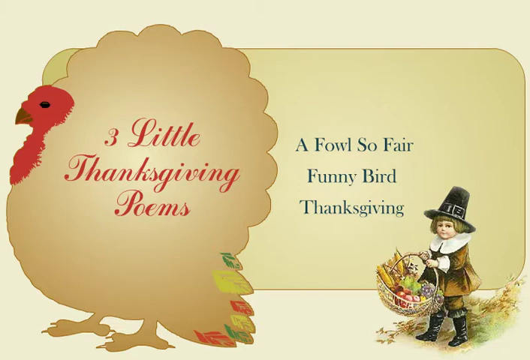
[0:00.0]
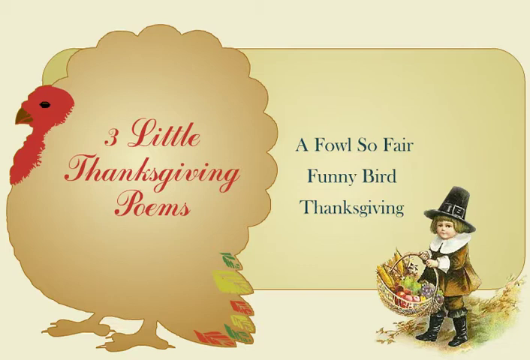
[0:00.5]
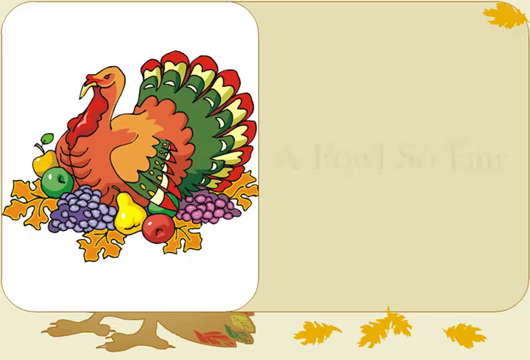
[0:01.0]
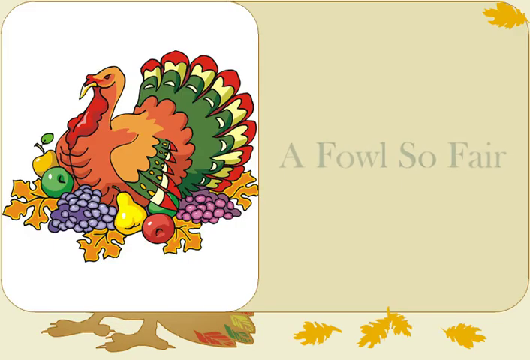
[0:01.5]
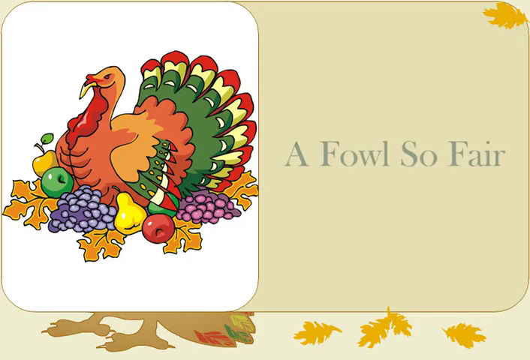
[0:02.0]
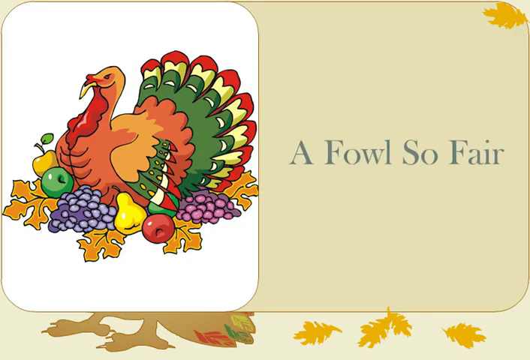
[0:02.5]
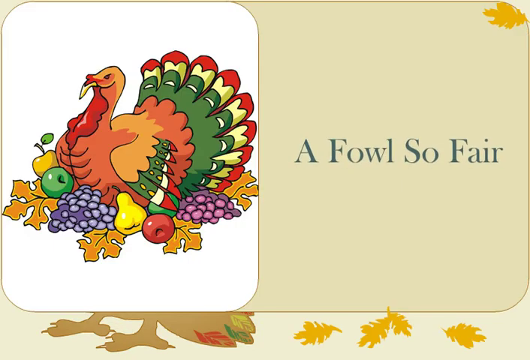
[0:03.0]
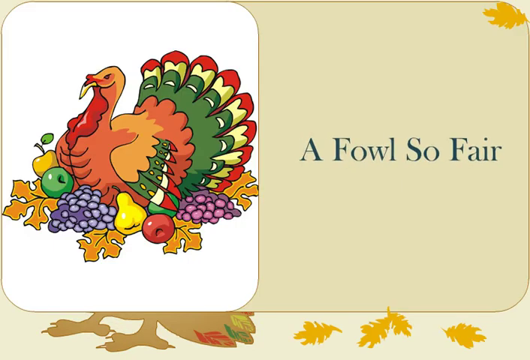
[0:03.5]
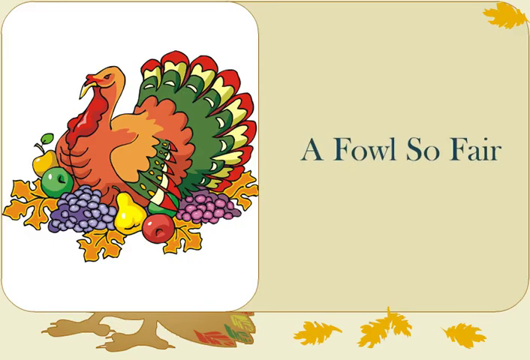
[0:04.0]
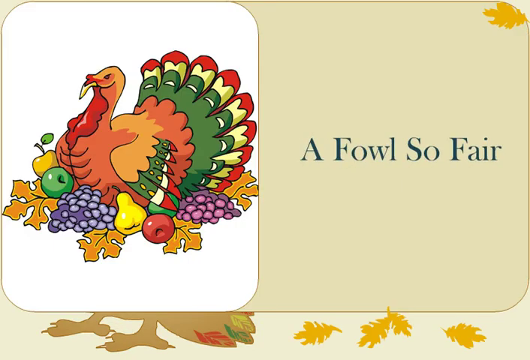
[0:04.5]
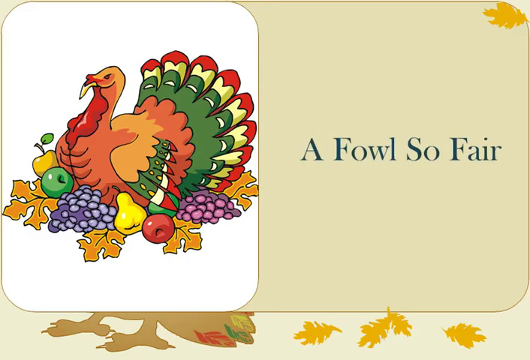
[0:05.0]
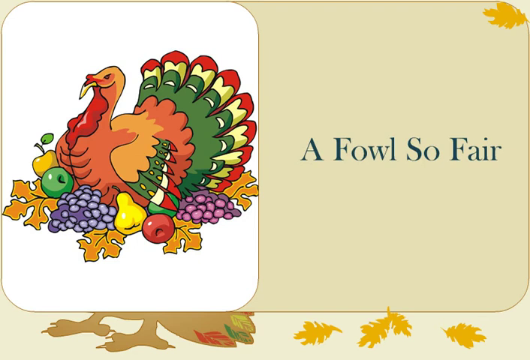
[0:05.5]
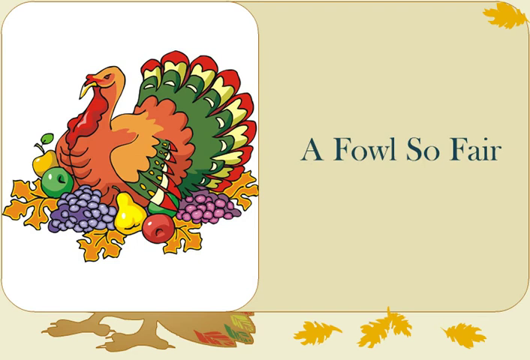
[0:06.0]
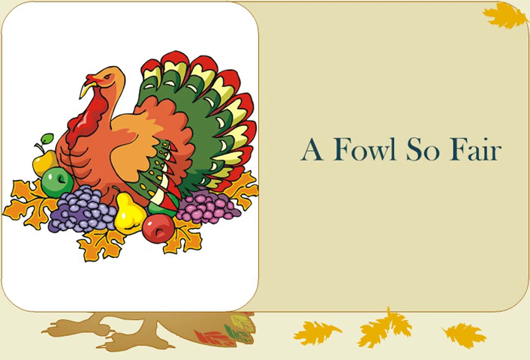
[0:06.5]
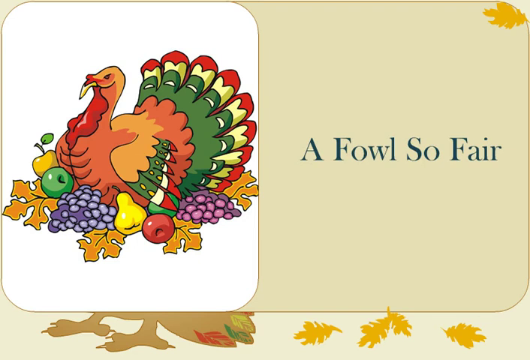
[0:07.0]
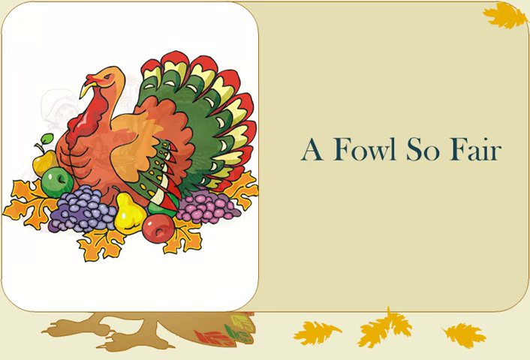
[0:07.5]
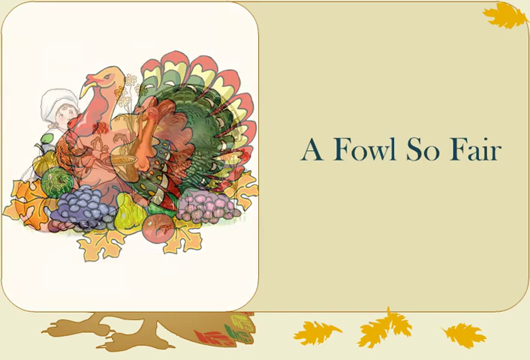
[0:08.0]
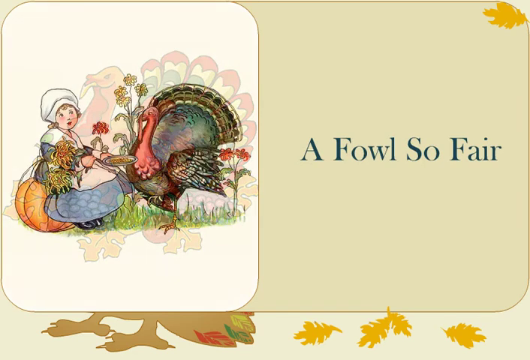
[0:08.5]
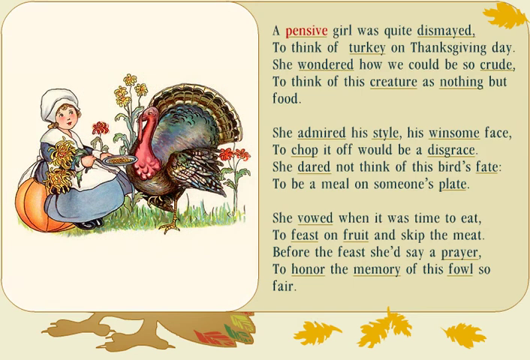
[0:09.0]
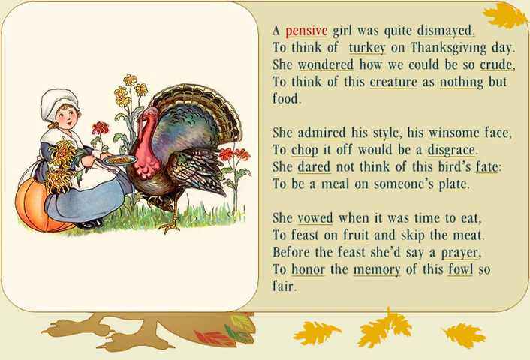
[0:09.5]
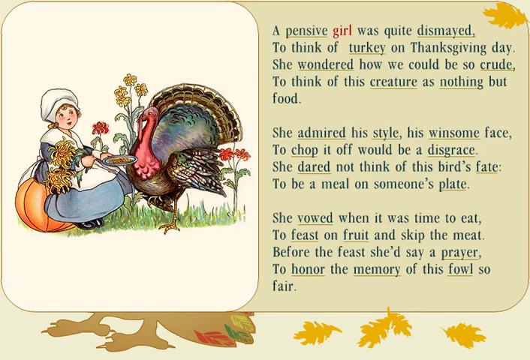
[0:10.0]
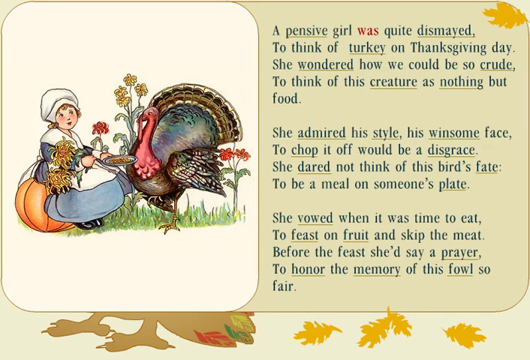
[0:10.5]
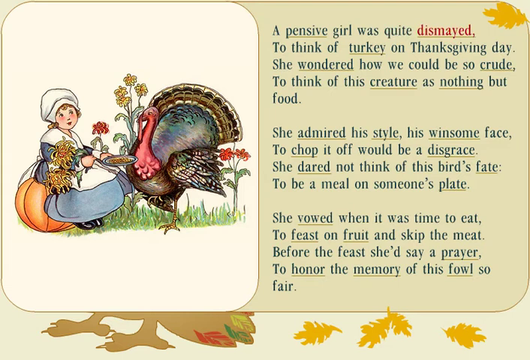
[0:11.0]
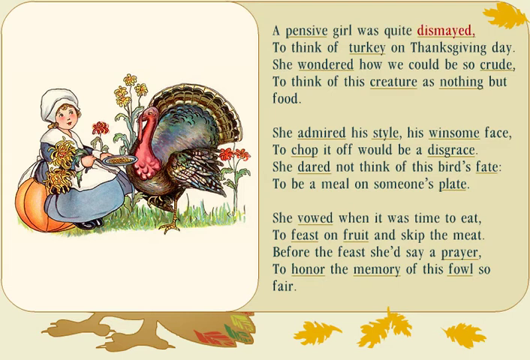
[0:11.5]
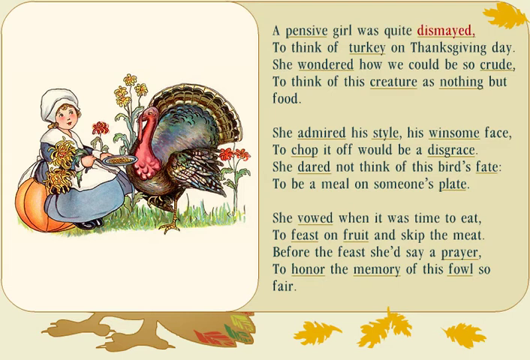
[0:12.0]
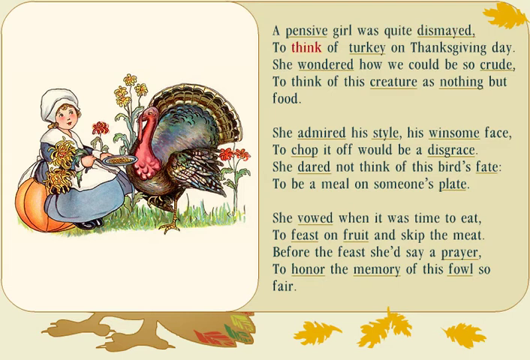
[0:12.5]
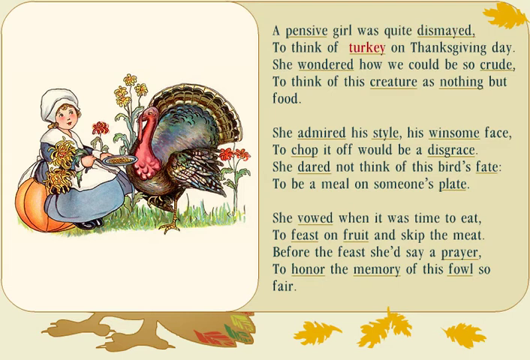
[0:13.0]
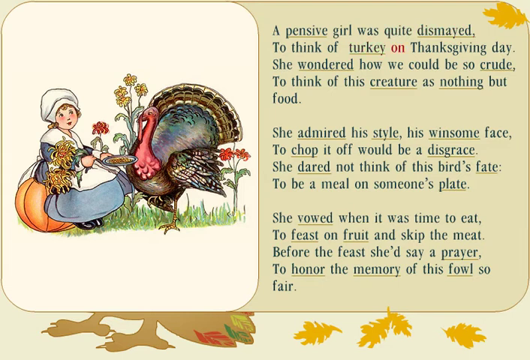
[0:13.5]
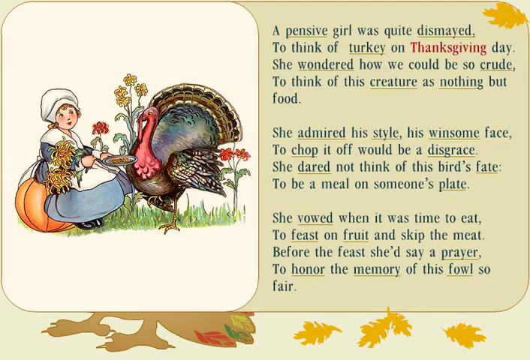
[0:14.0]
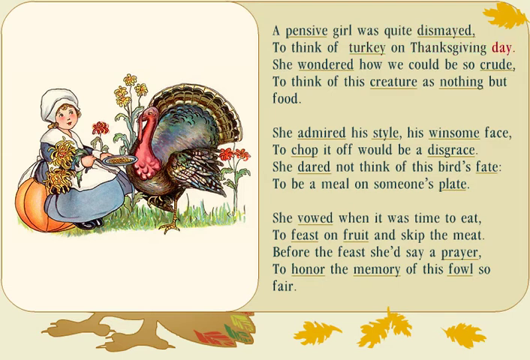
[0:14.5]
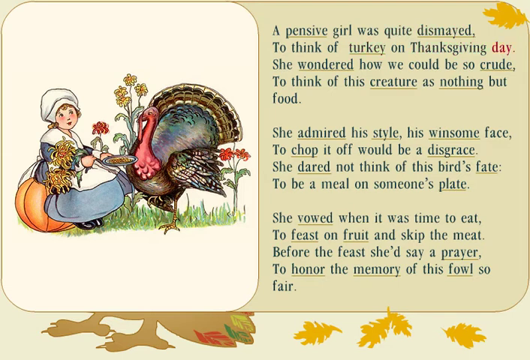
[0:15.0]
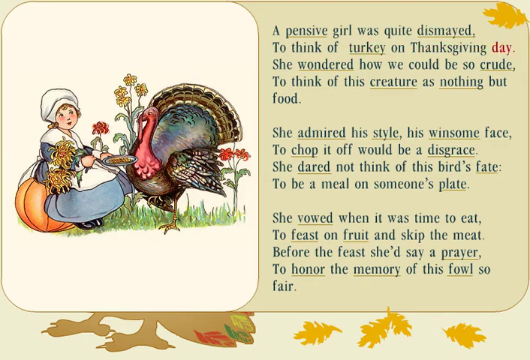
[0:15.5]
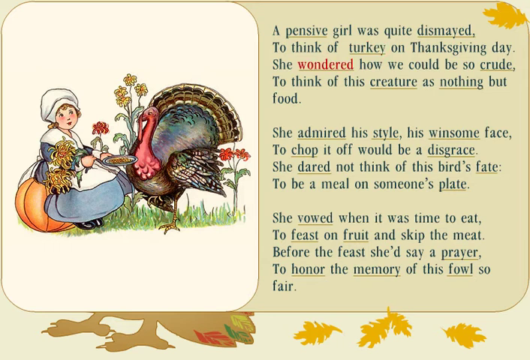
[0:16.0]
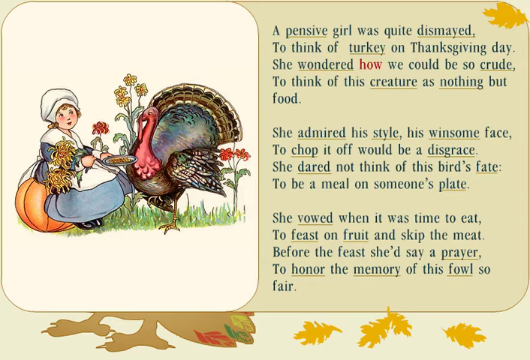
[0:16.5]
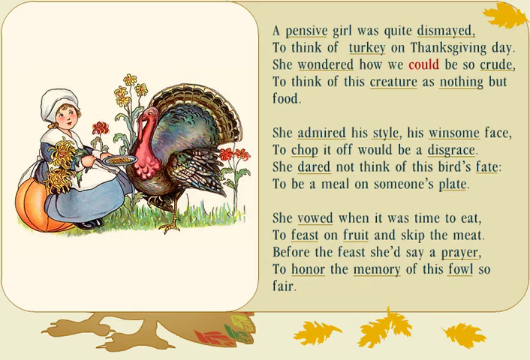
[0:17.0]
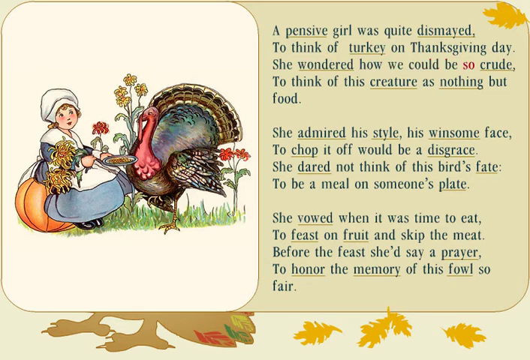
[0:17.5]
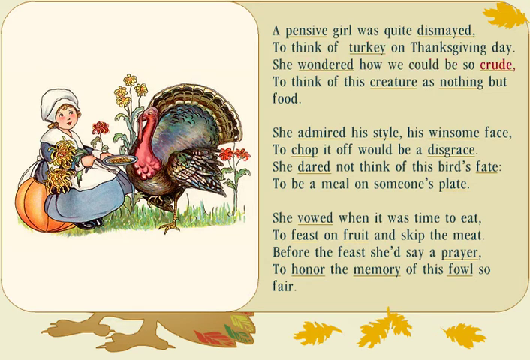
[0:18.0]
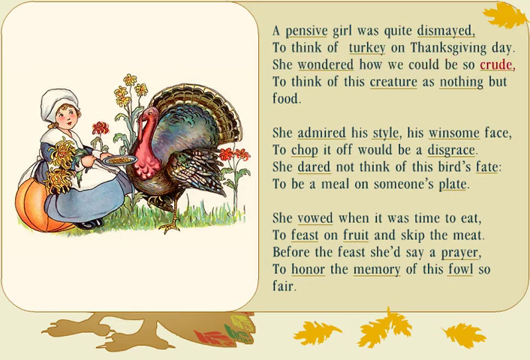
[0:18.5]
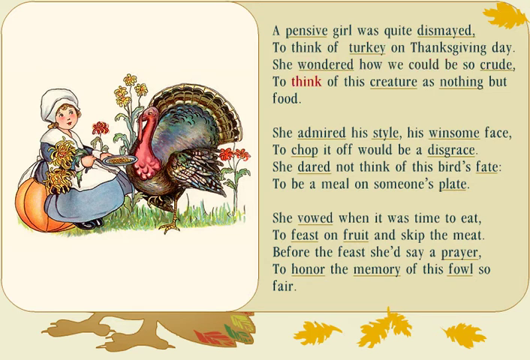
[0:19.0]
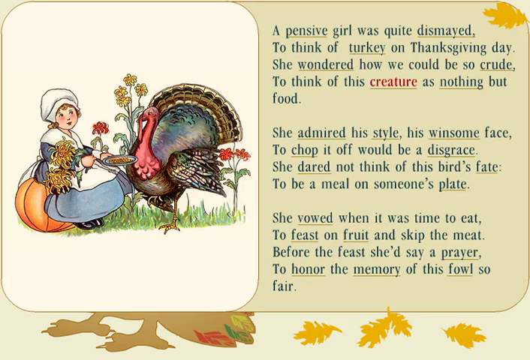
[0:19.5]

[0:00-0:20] The video opens with a turkey, and the text reads "three little Thanksgiving poems," along with the names of the three poems that will follow. It cuts to a colorful cartoon turkey on the left with the text "a fowl so fair," the name of the first poem. It then cuts to a picture of a young girl with a turkey, with the poem on the right-hand side. The poem has a kind of taupe background and bluish, kind of old-looking typewriter-style writing; it seems to be about a girl who was dismayed about turkey on Thanksgiving Day. The girl on the left is sitting on a big pumpkin and wears a full dress, kind of a colonial-type dress. The turkey is very big.